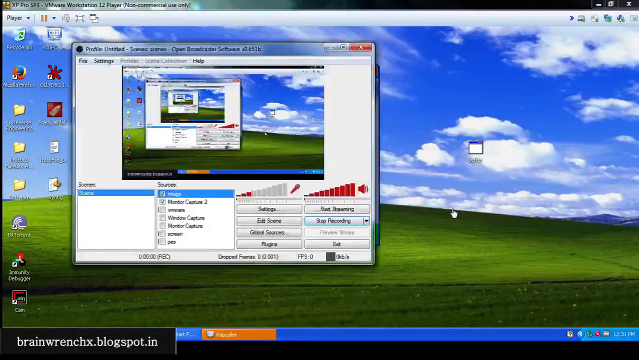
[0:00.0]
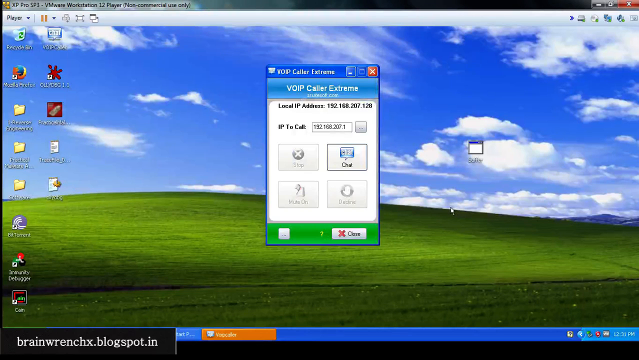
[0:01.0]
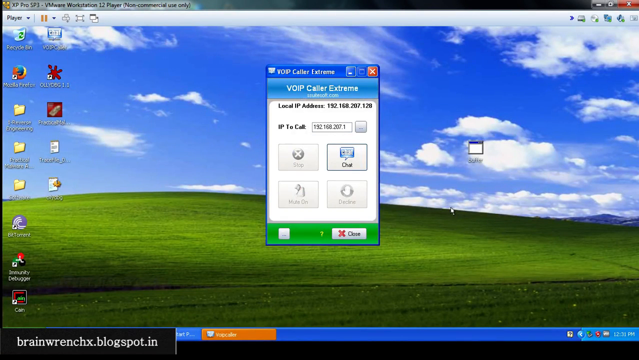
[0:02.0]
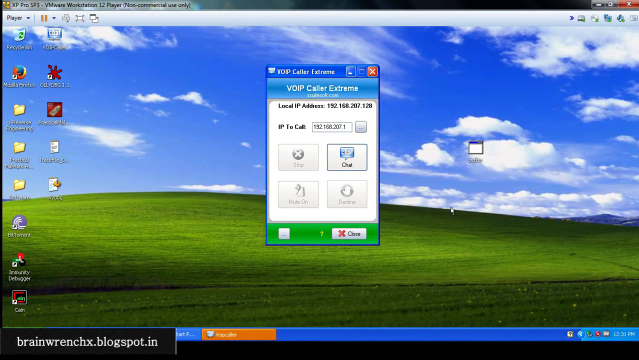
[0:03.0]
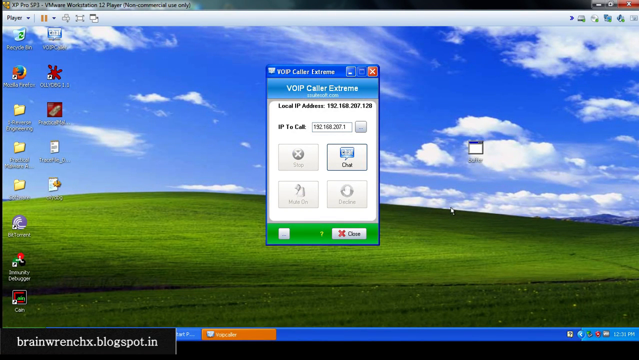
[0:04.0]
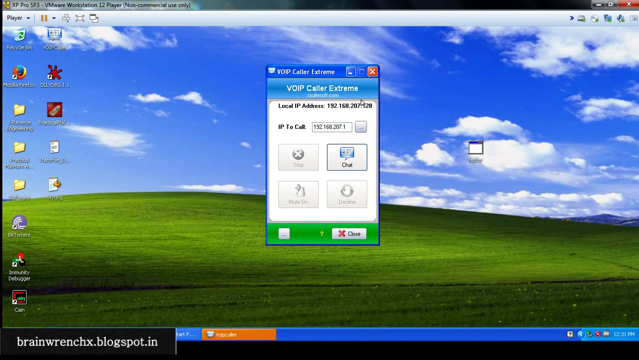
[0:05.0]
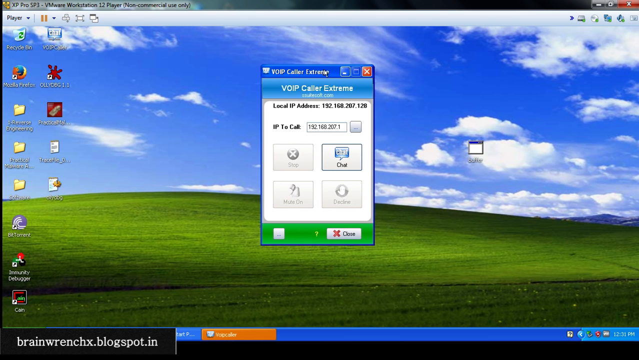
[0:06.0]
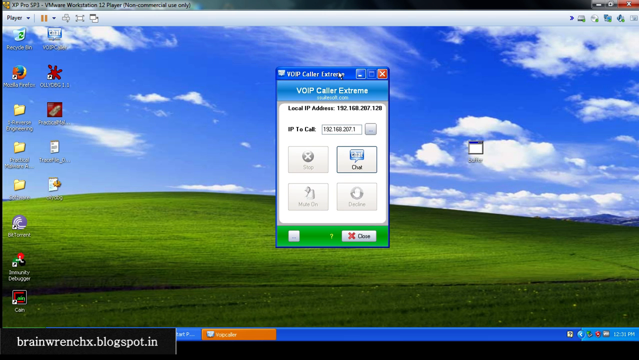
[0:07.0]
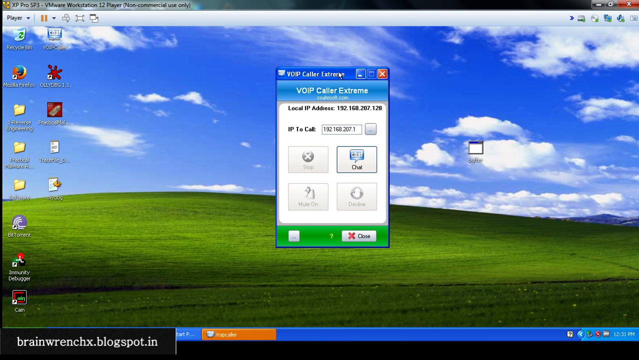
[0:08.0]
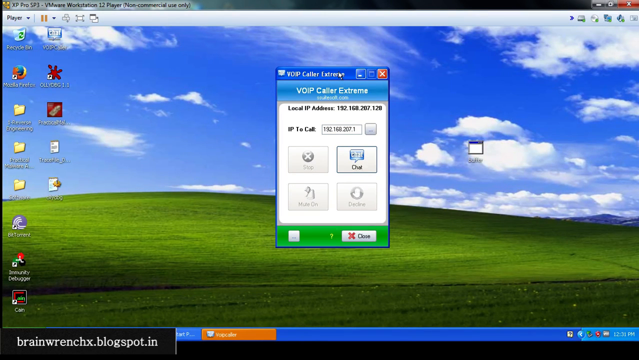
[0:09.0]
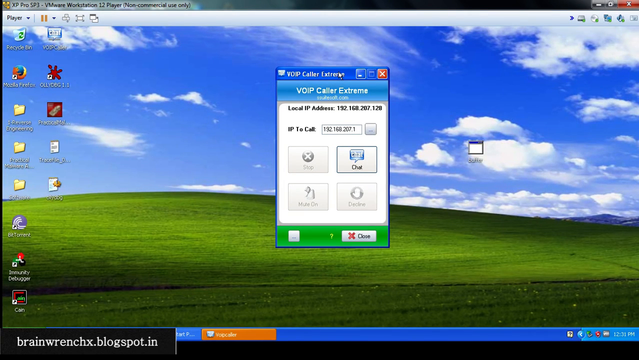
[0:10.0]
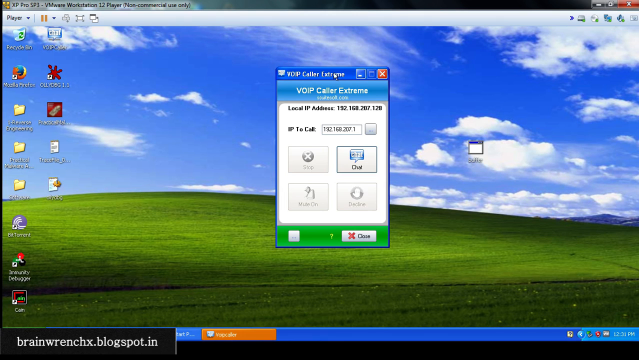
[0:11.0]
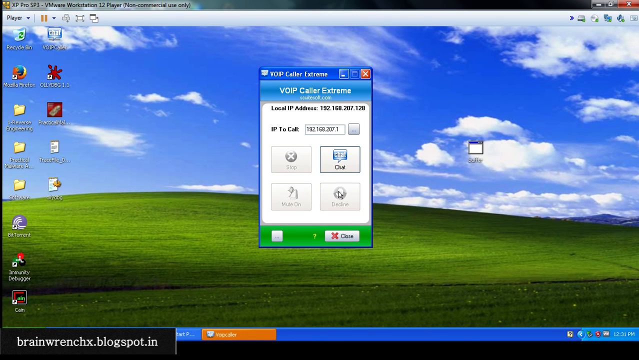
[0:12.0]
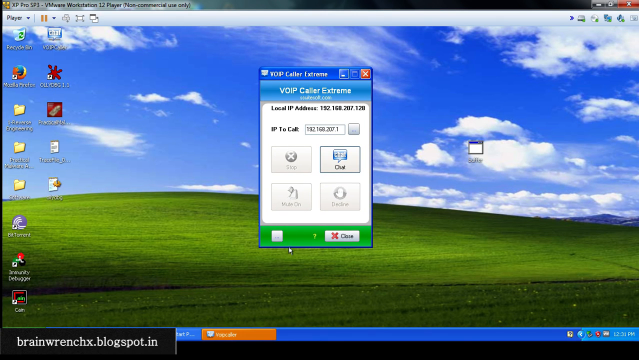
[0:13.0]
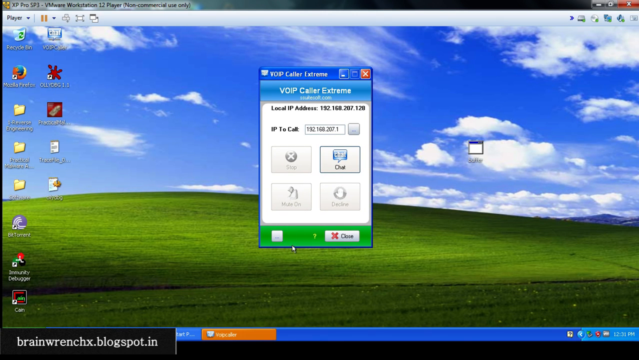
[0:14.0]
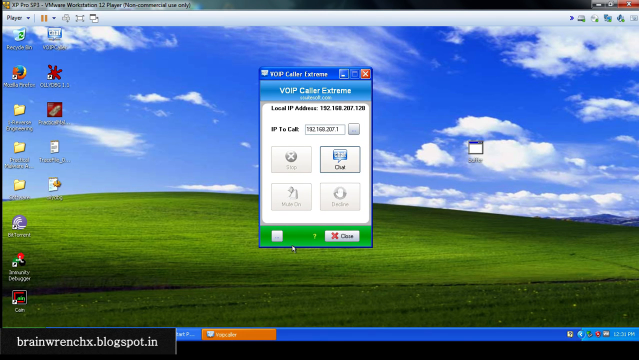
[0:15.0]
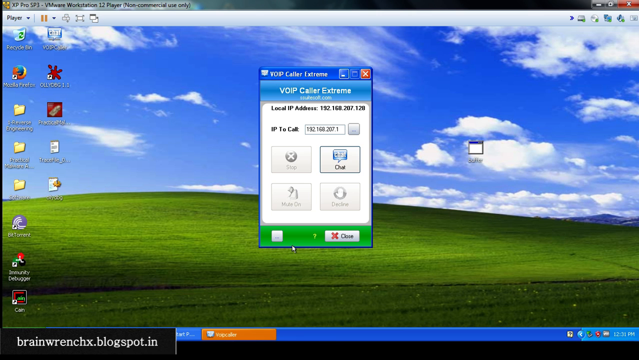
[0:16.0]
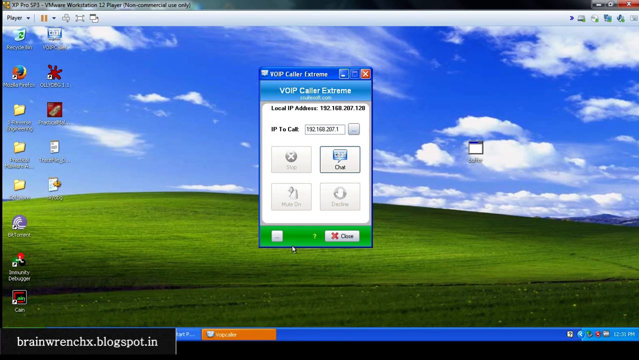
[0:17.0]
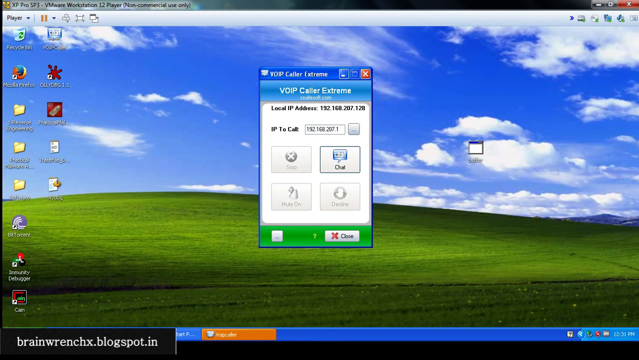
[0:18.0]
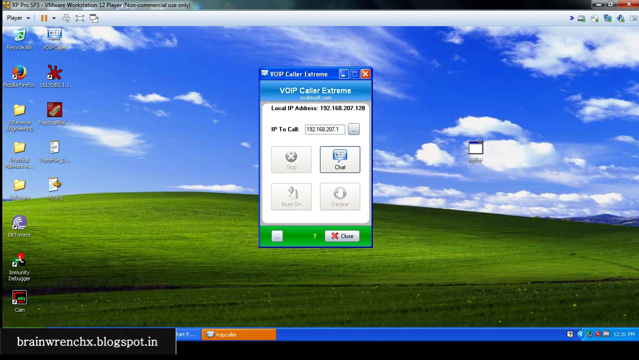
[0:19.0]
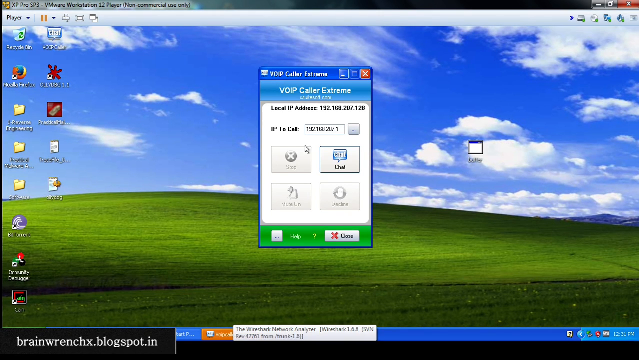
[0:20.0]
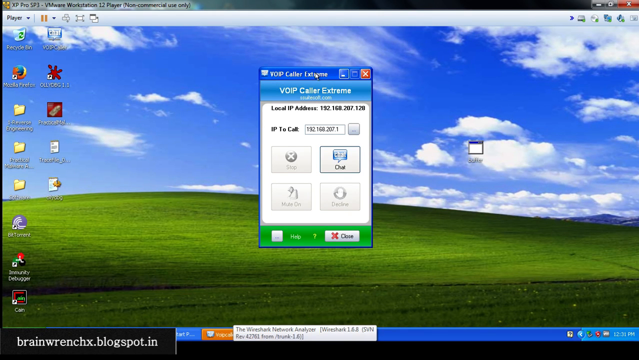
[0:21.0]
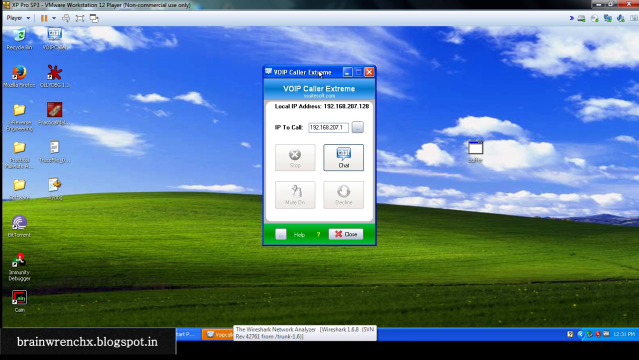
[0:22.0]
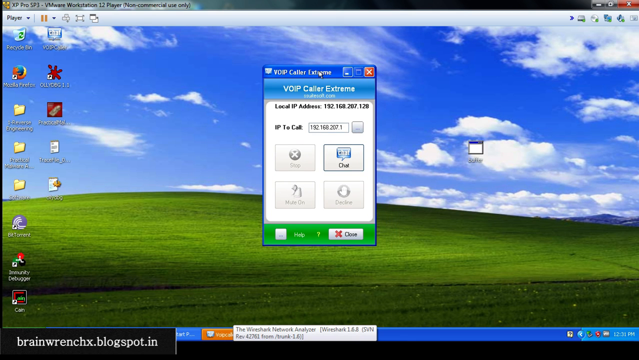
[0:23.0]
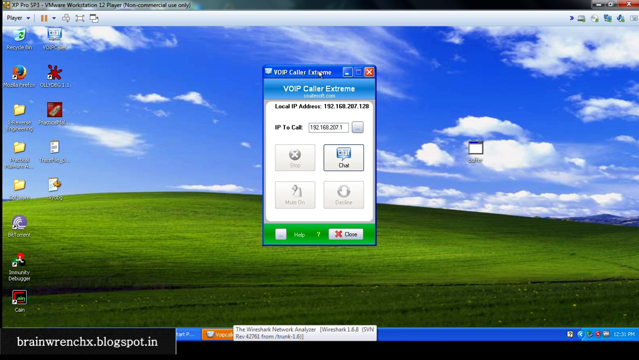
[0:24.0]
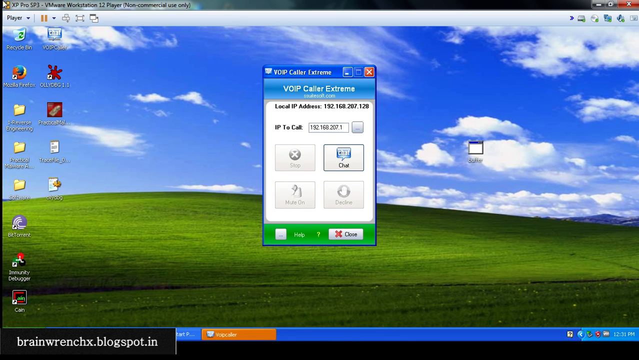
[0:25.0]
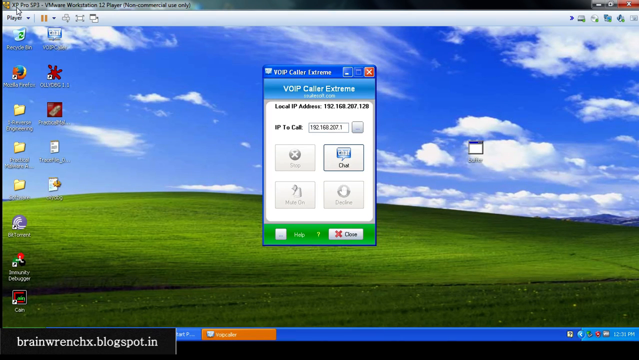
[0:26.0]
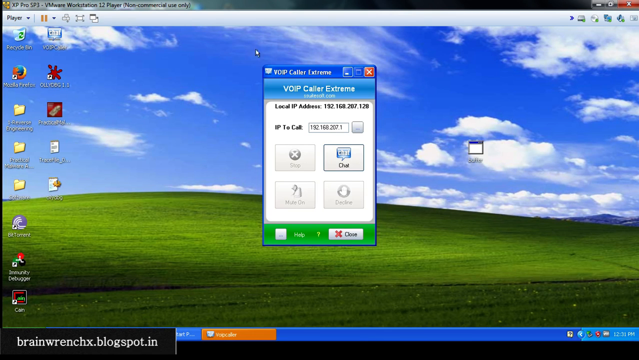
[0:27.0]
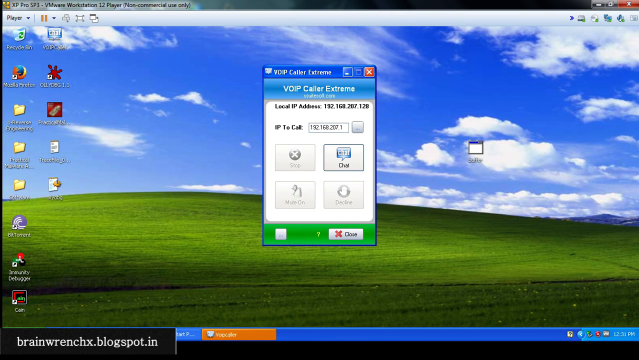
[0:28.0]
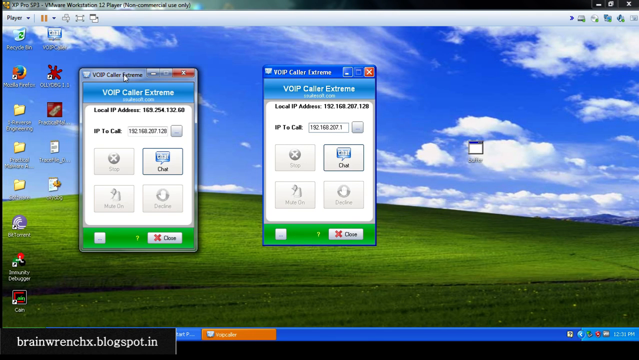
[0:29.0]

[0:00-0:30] A Windows desktop is on screen, apparently for a tutorial on a Windows desktop app called VoIP Caller Extreme. The mouse pointer moves the app window back and forth and shows how to use the app.